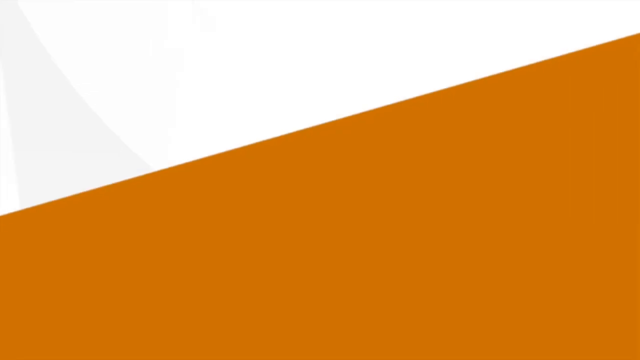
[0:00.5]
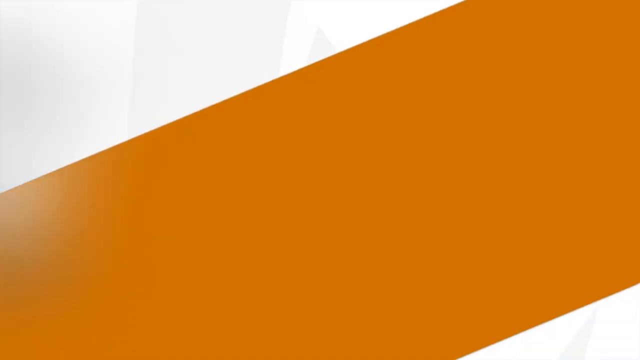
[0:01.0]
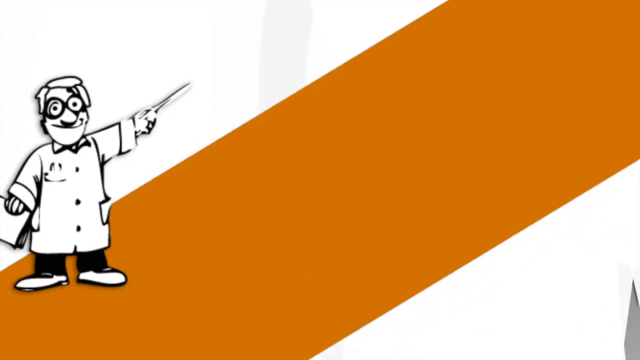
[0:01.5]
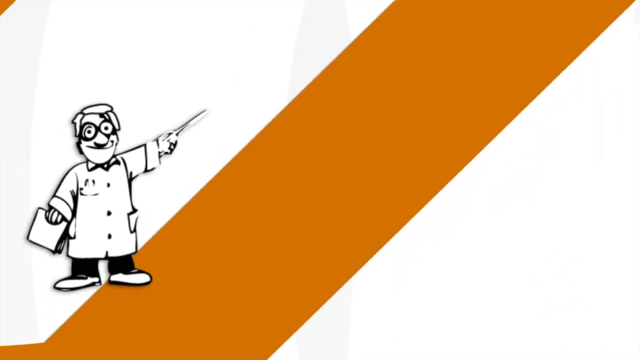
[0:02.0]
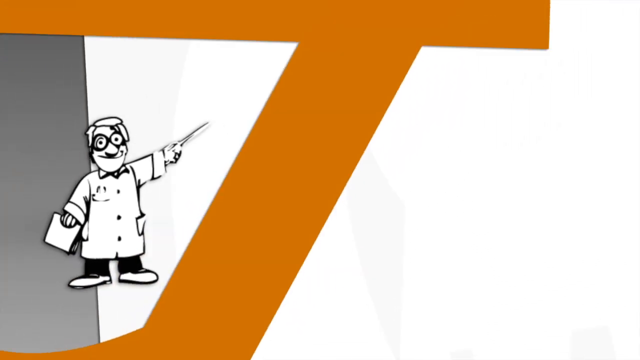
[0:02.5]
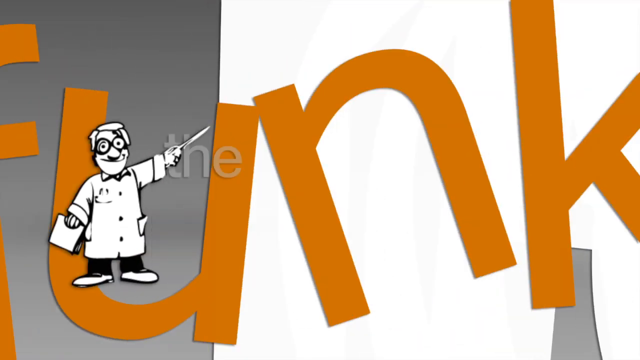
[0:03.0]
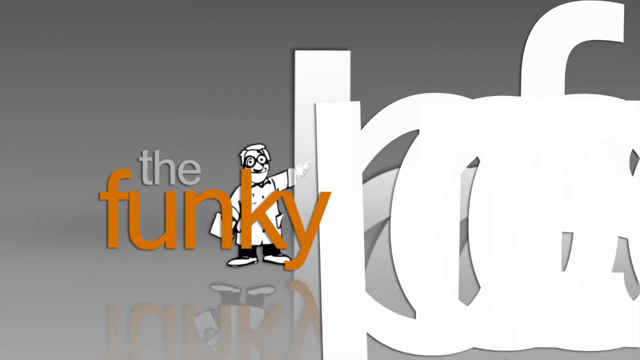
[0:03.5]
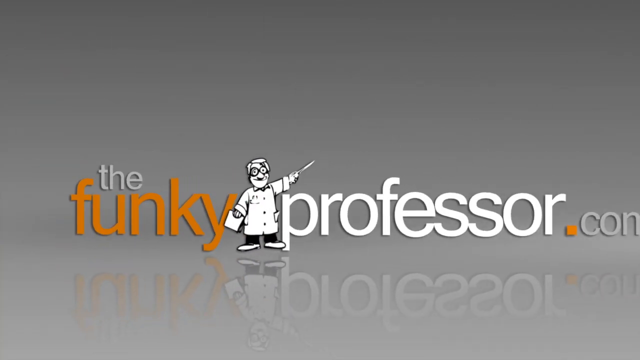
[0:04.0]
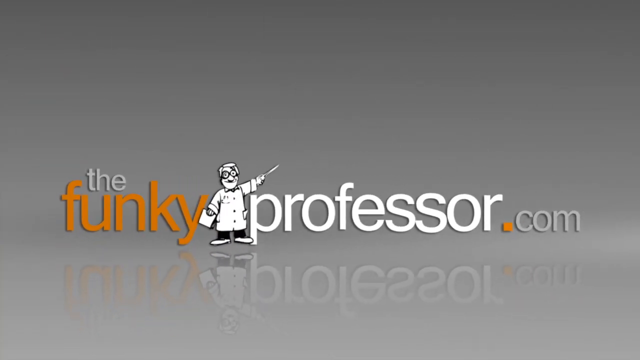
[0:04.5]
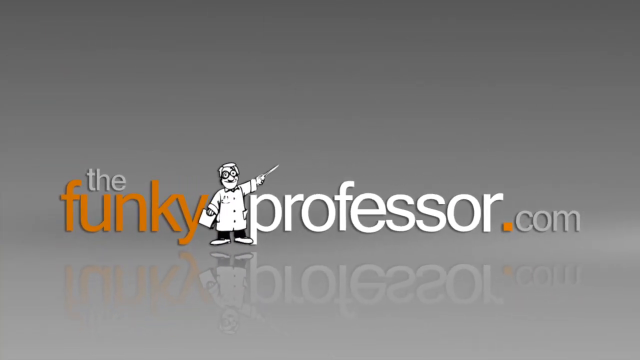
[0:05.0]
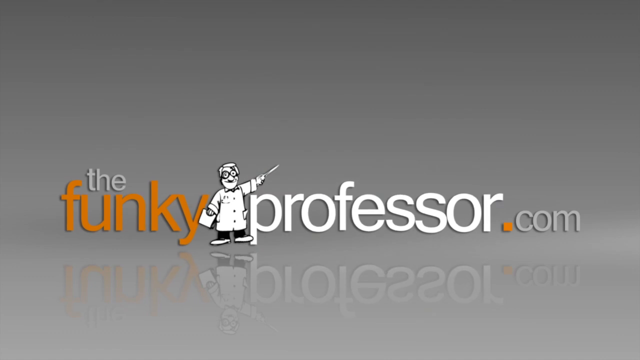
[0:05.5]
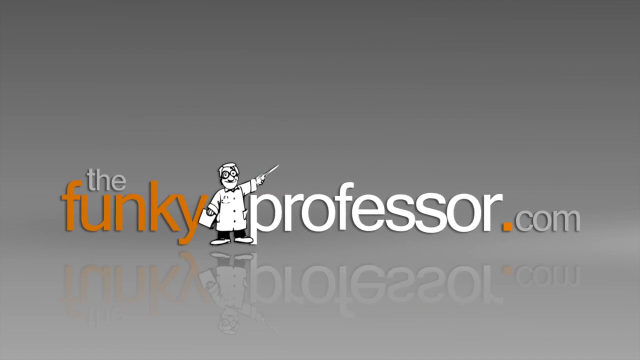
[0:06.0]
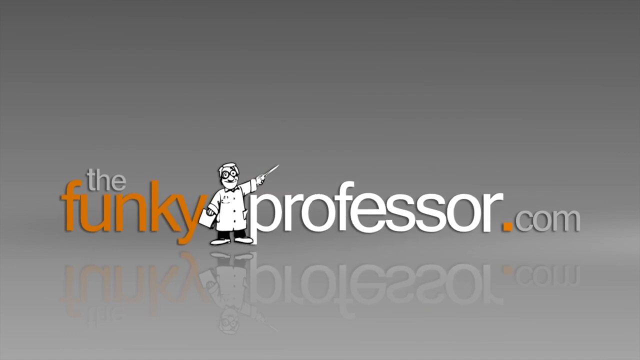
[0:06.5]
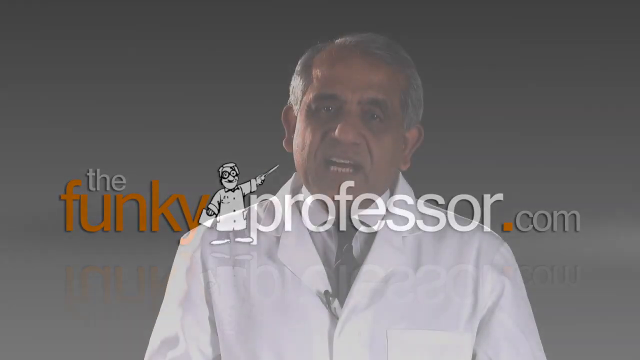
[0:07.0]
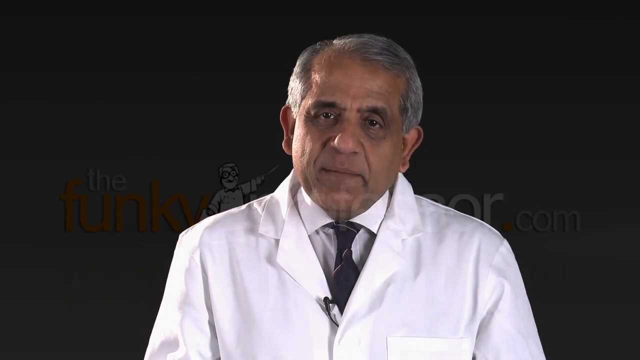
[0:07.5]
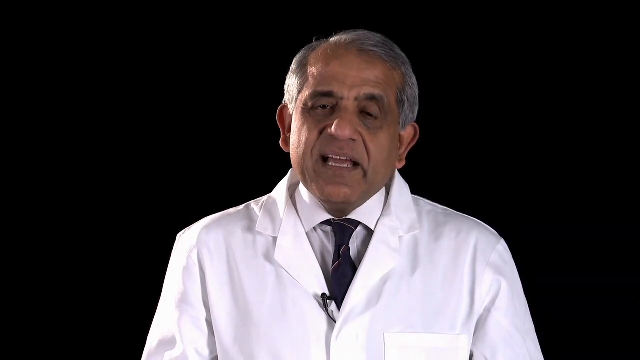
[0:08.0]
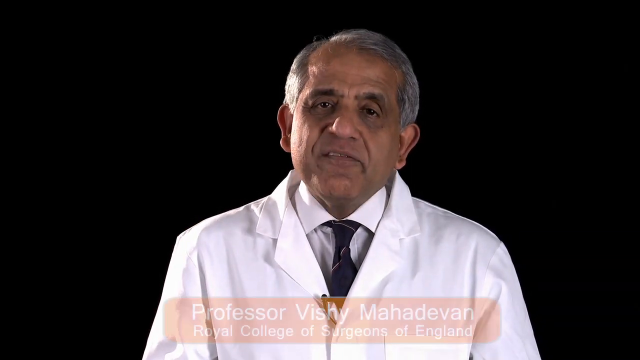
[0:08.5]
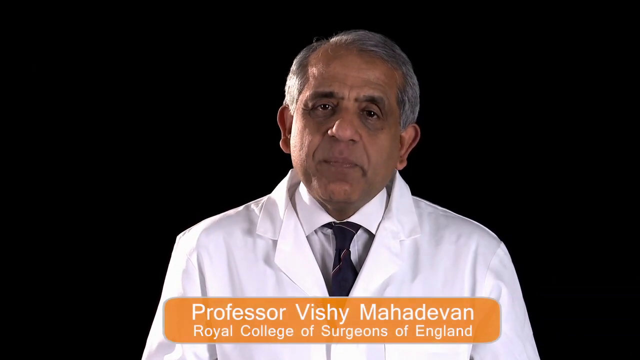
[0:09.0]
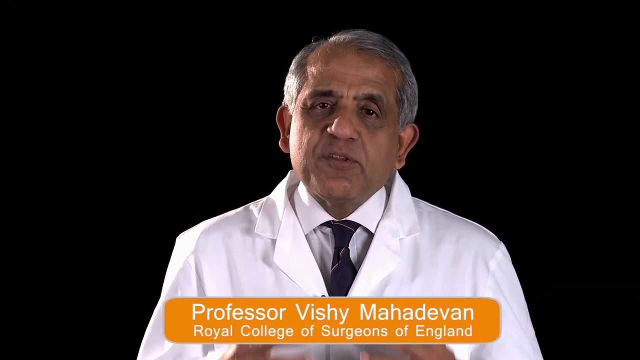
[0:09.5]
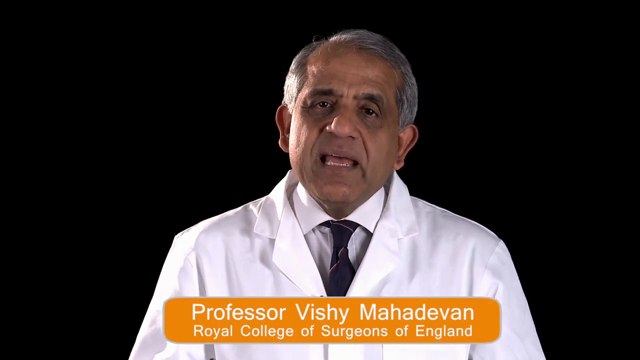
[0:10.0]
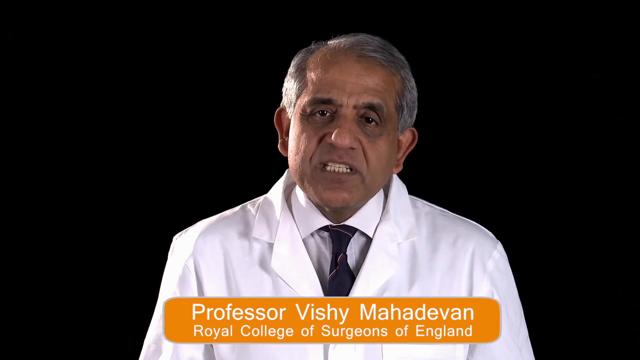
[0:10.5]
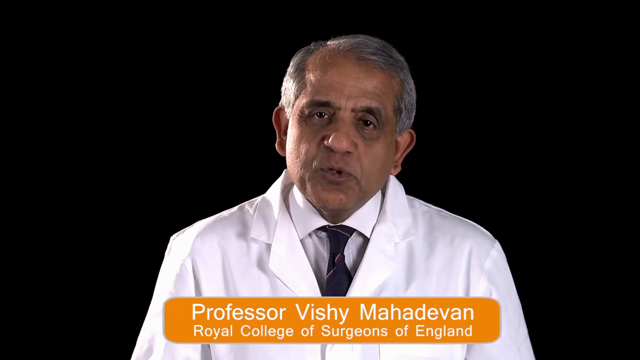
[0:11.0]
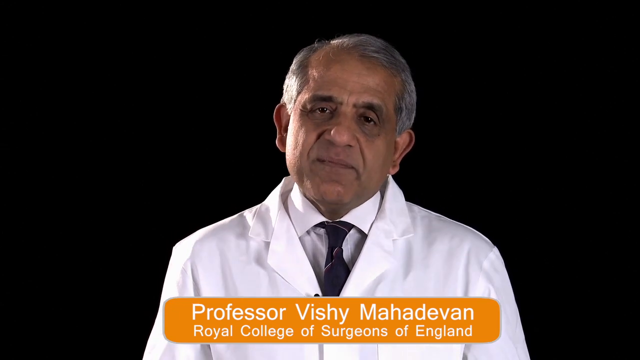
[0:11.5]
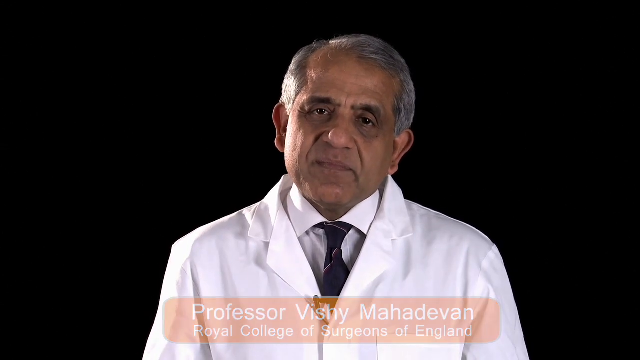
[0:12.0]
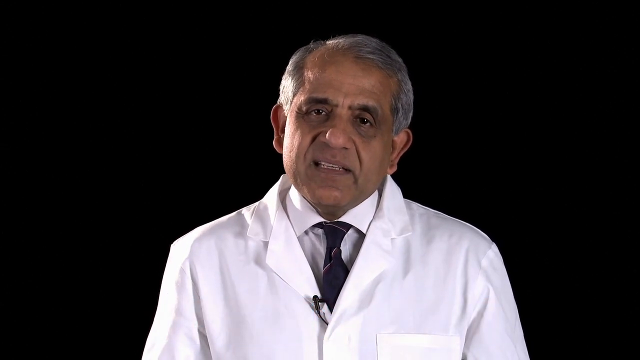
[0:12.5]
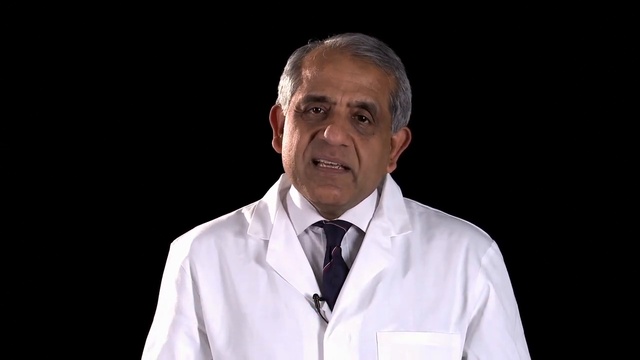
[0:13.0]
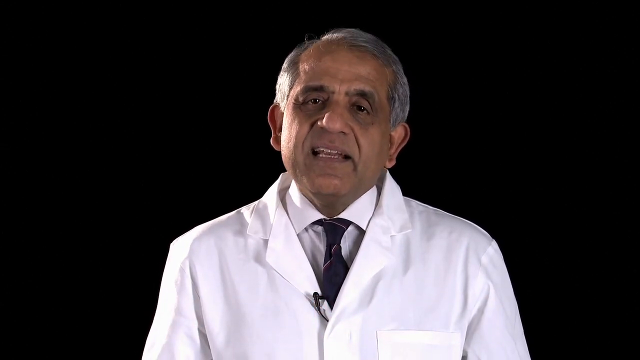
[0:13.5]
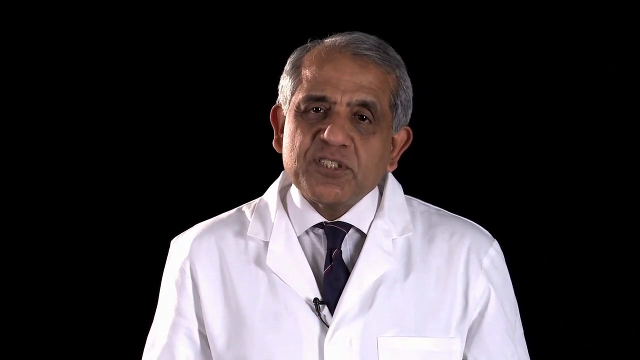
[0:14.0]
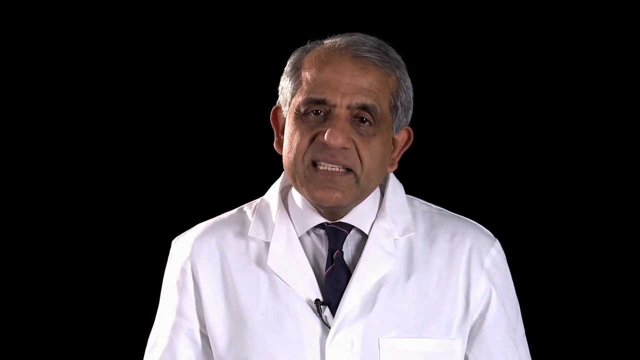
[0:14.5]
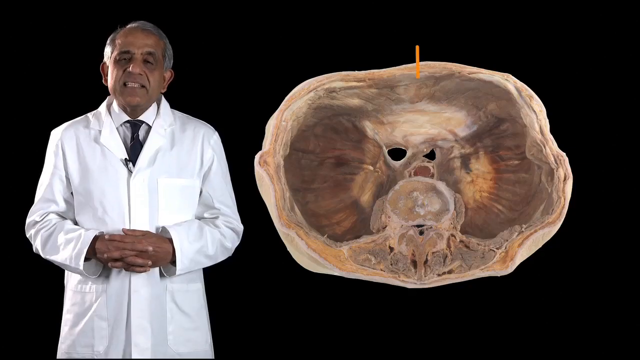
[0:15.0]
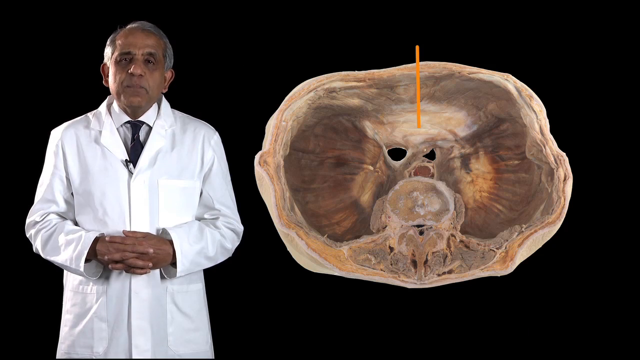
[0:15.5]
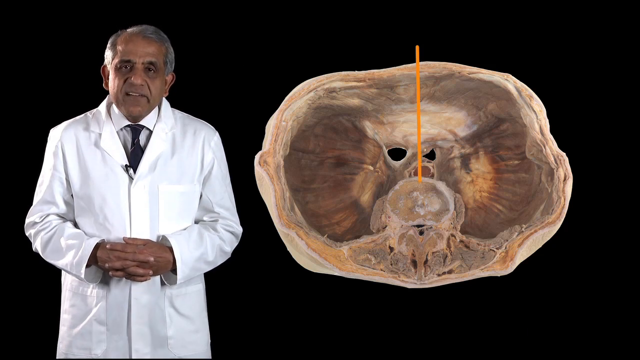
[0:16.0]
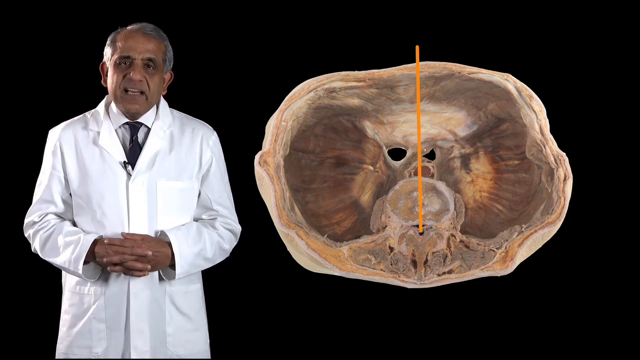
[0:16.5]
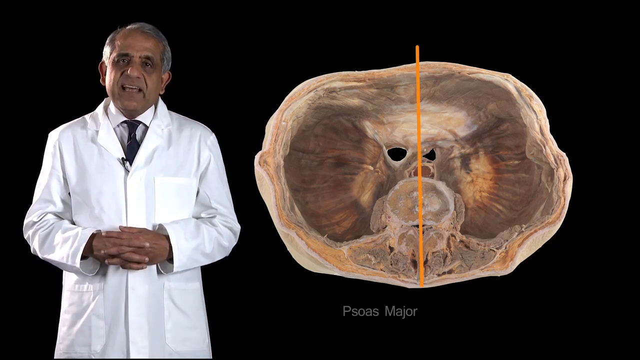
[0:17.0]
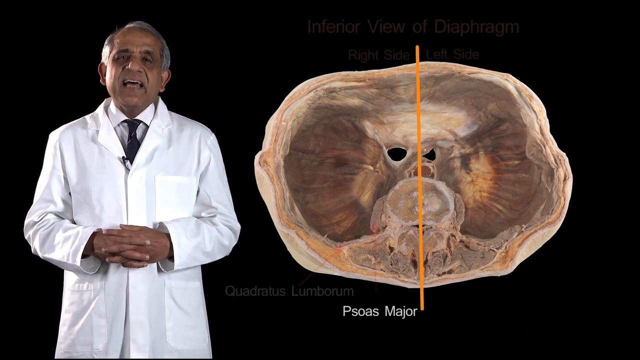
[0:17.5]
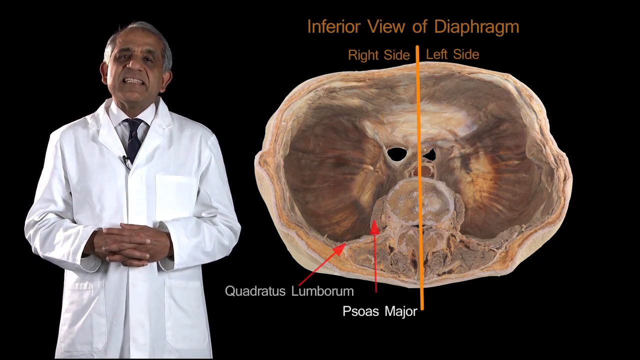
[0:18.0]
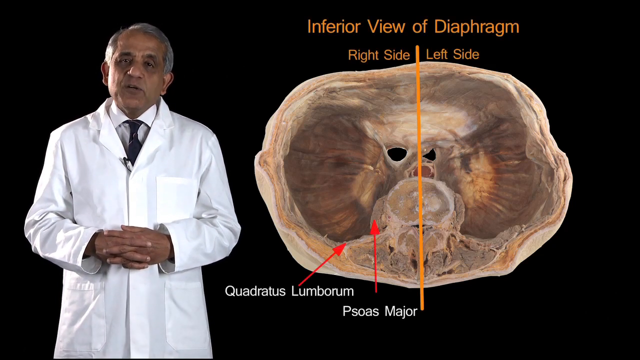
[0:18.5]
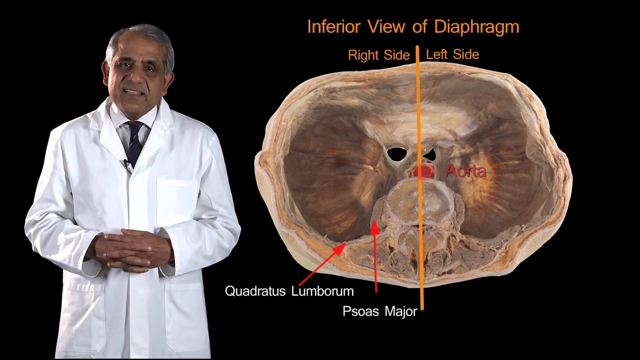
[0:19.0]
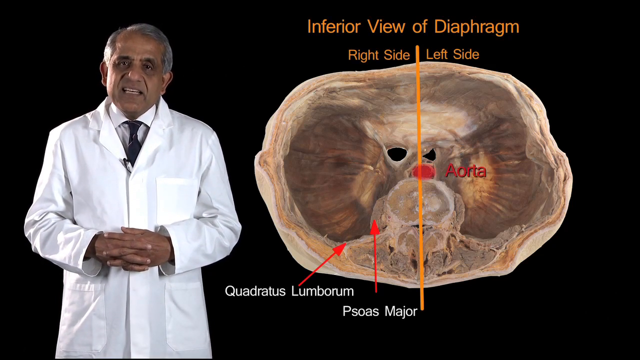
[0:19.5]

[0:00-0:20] The video opens on an orange background, followed by graphics: on a grey background the words "thefunkyprofessor.com" appear in orange and white lettering, with a little cartoon picture of a professor within the words. This fades, and the head and shoulders of what looks to be a professor appear: an older Asian gentleman dressed in a white jacket with a white shirt and blue tie. He talks for a few seconds, and then his name appears in text, "Professor Bishi Mahadevan", from the Royal College of Surgeons in England. This fades, and the same professor is shown moving to the left-hand side of the screen in a sort of whole-body view; he is talking, and his head, shoulders and hips are visible. To his right is an image of what looks to be the inferior view of the diaphragm. Text appears on it with the words "right" and "left", marking the right and left sides of the diagram, followed by labels for some of the arteries: the aorta, the quadratus lumborum and the psoas major. The labels have arrows showing exactly where these are located.